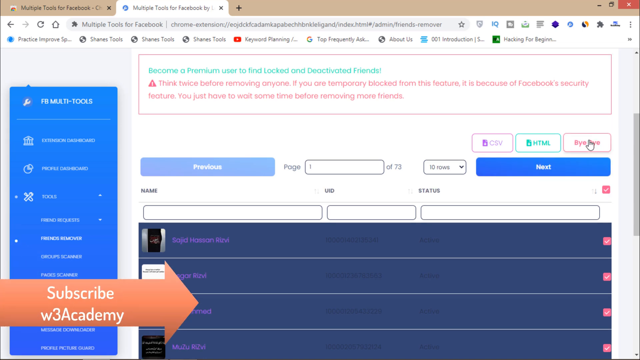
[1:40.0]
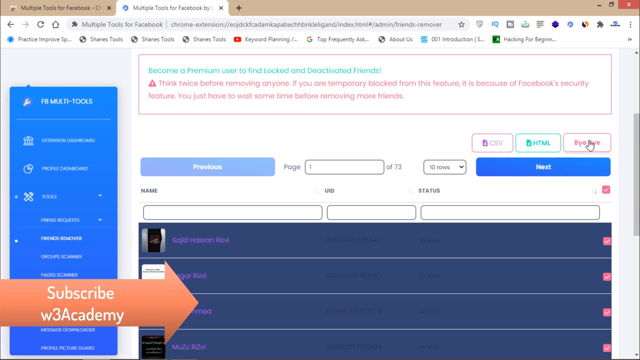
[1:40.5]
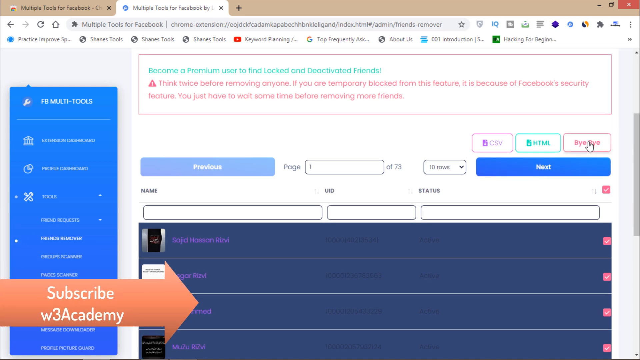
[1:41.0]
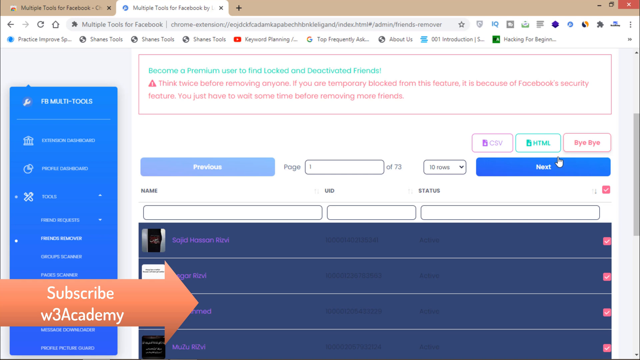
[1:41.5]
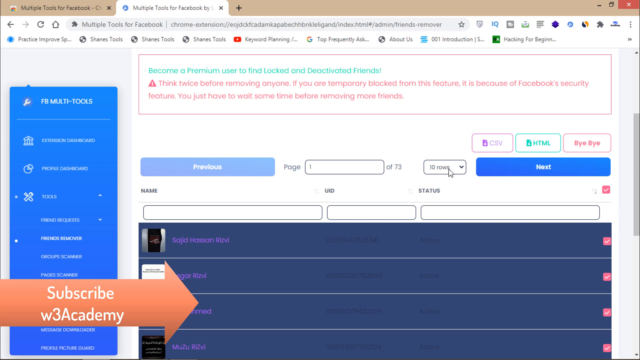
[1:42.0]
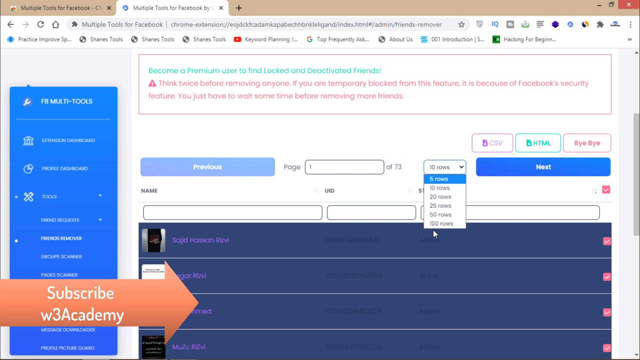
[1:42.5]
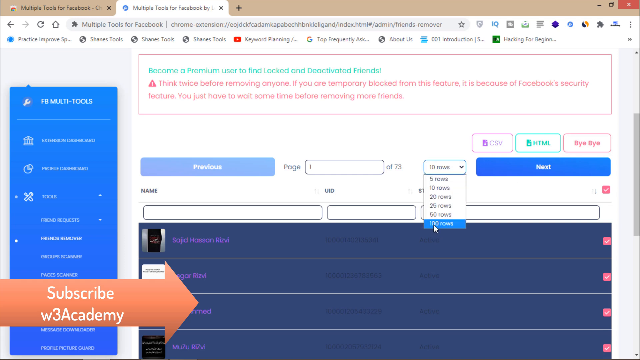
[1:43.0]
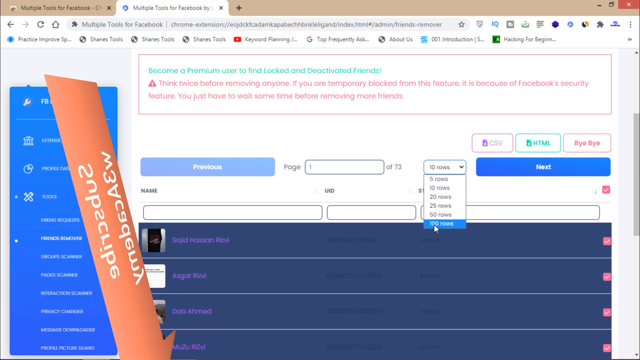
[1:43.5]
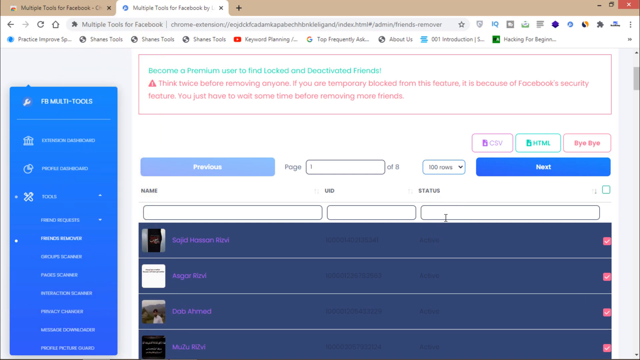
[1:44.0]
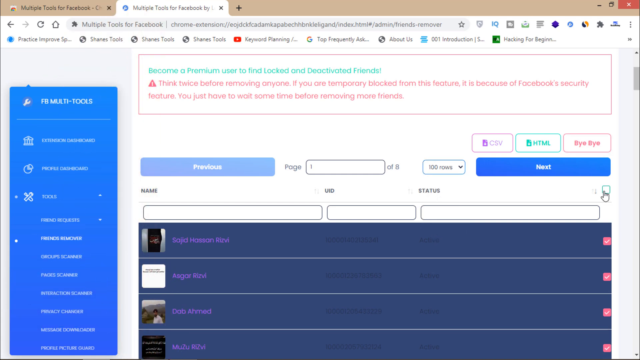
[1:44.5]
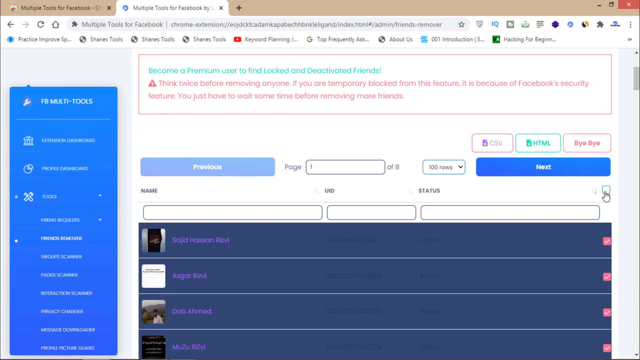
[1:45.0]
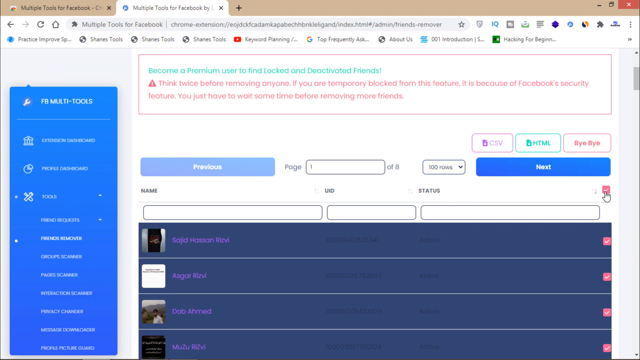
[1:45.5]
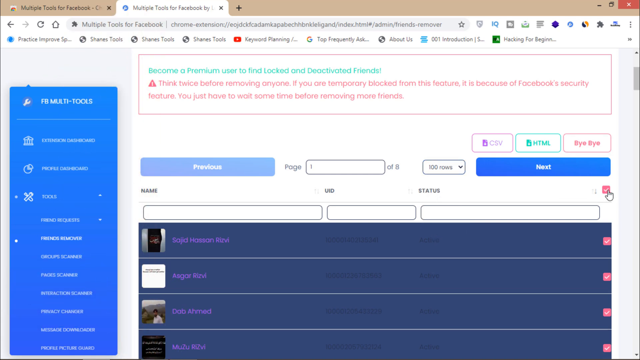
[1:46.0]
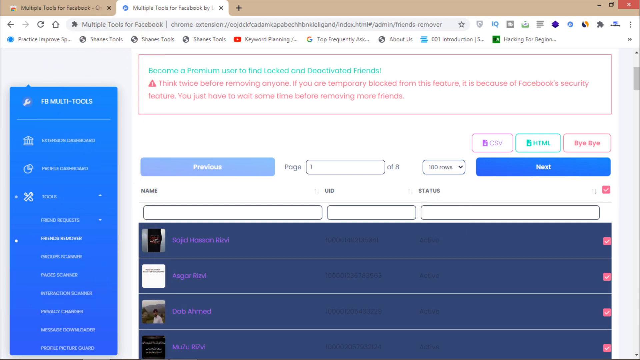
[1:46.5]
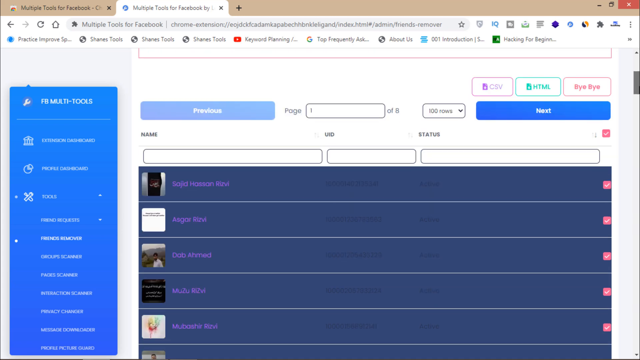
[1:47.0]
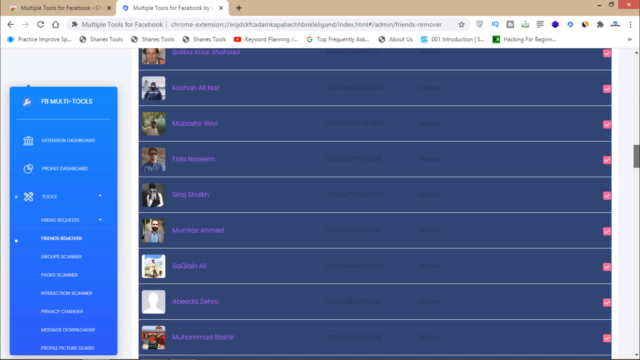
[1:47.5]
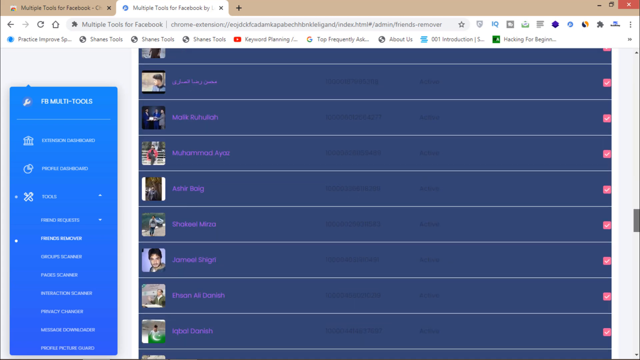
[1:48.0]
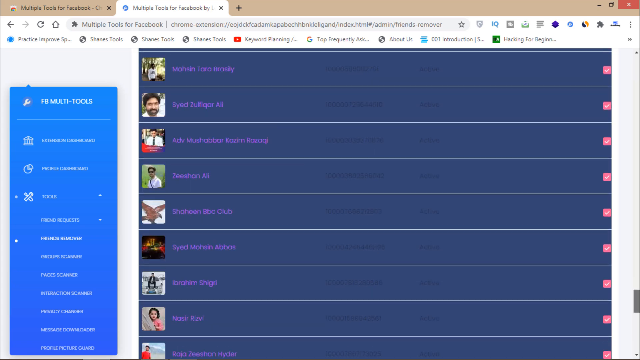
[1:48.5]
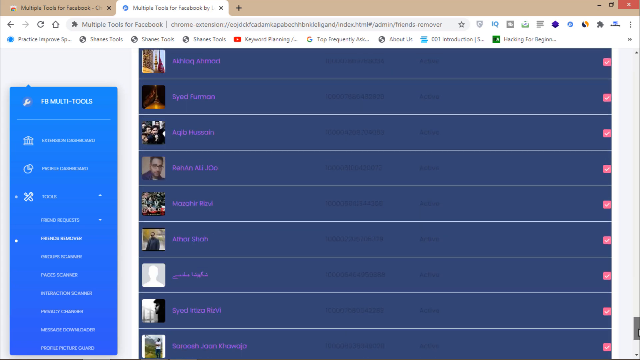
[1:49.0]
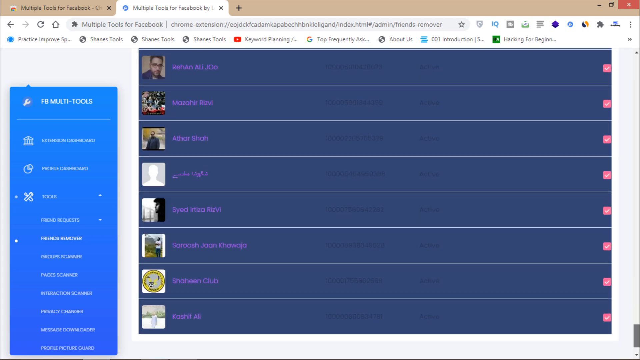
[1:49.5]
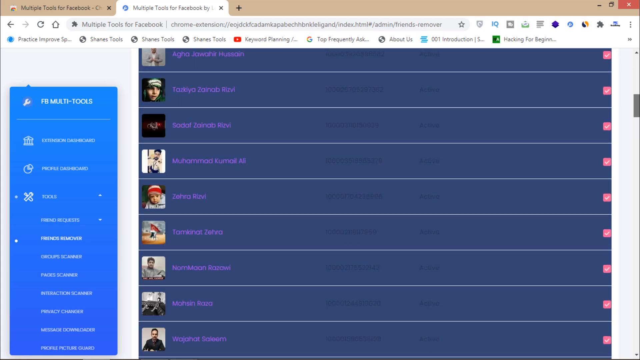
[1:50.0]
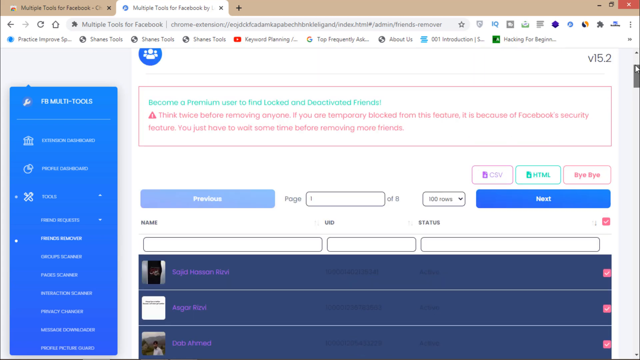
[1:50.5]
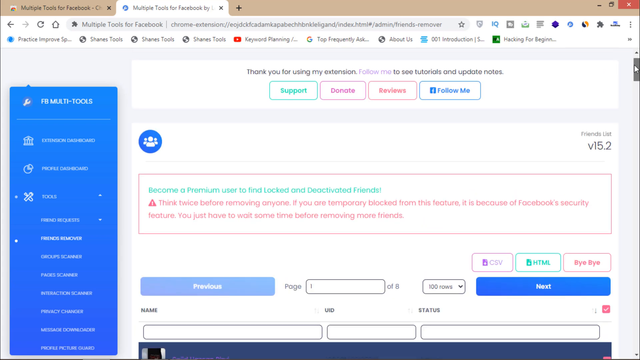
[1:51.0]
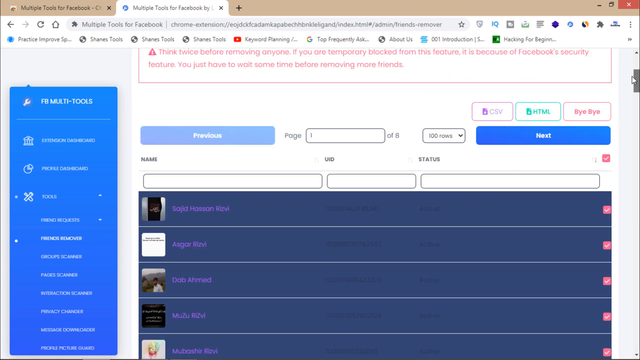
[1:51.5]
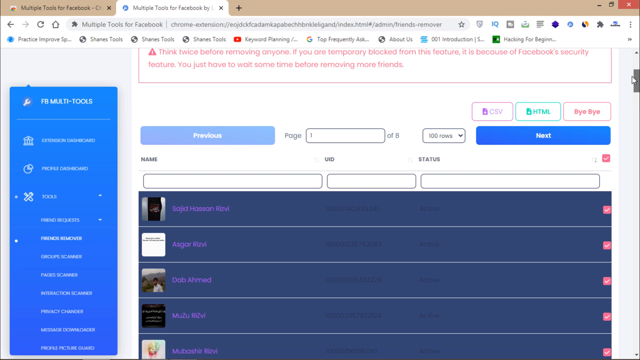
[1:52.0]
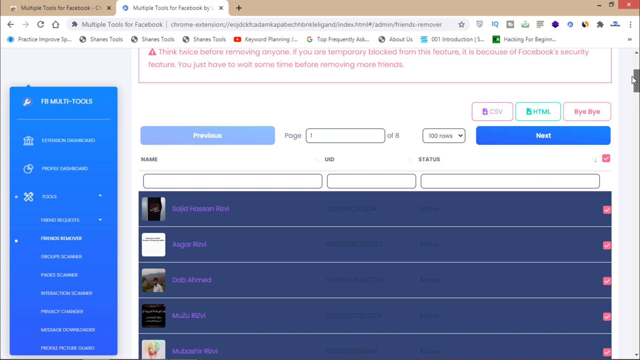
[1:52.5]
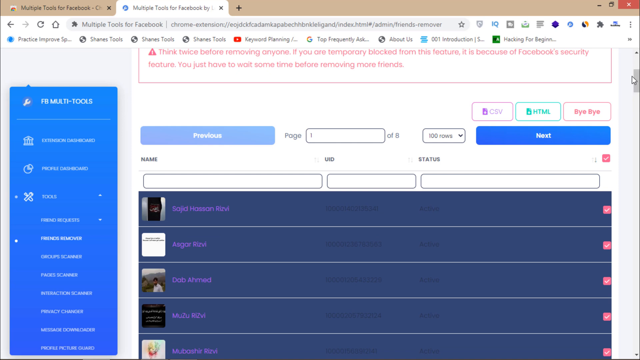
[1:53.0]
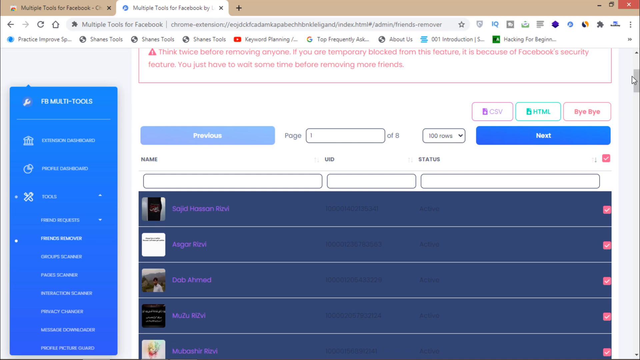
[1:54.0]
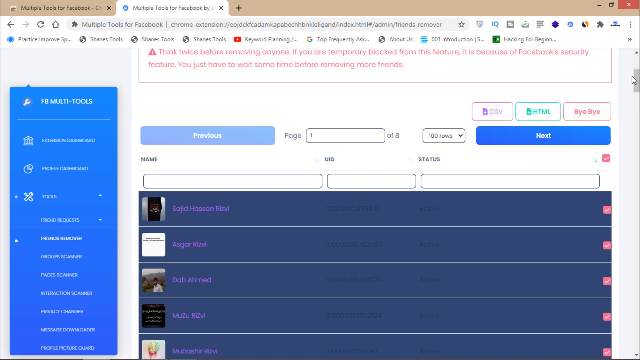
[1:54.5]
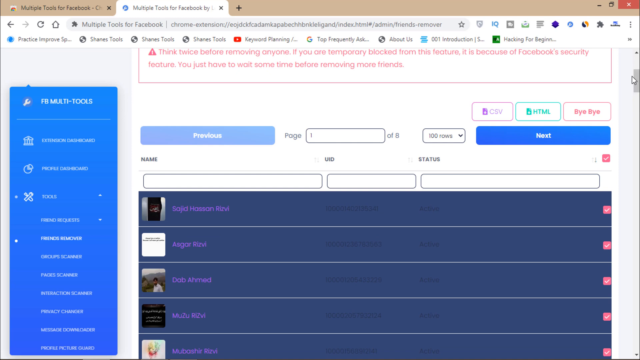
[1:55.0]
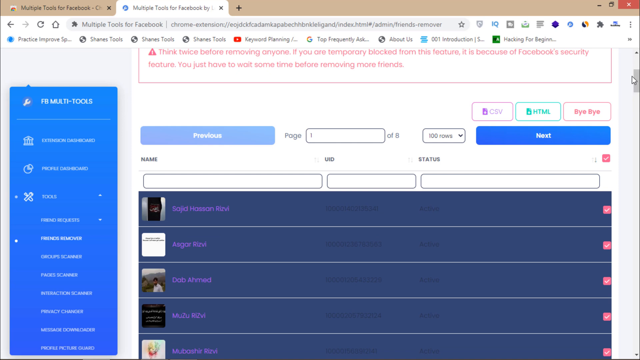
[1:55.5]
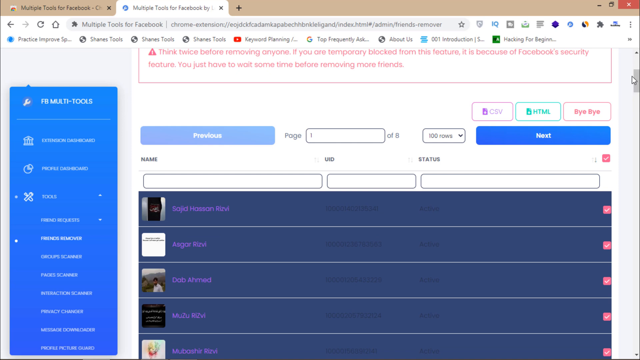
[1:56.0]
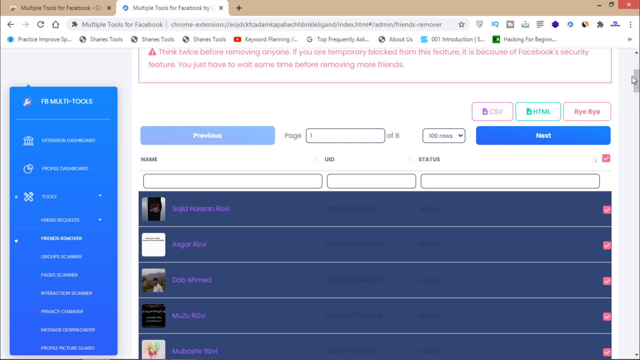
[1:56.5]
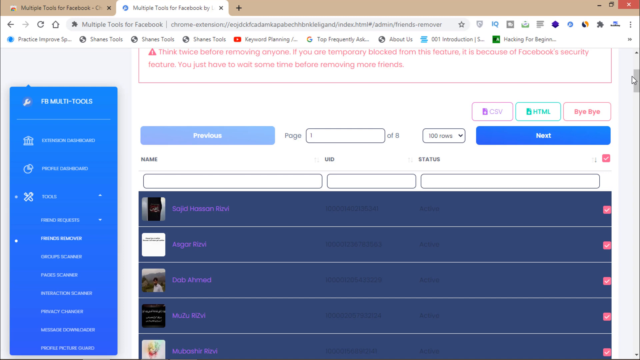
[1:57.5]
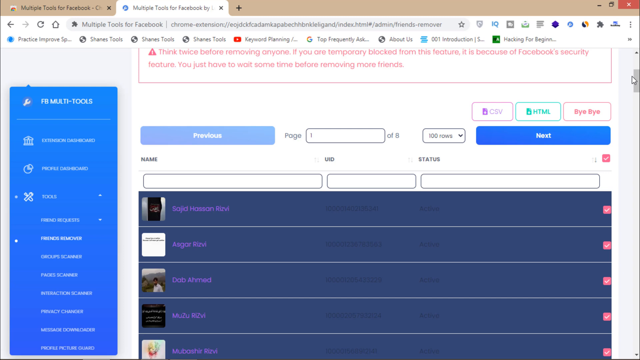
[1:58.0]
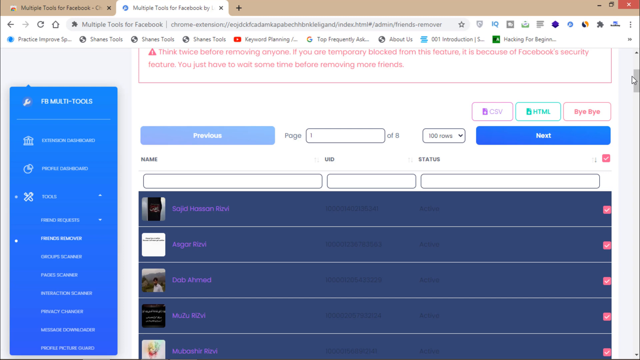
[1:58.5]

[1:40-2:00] The multiple tools for Facebook extension shows the text "become a premium user to find locked and deactivated friends. Think twice before removing anyone," along with the notice about being temporarily blocked by Facebook's security feature and having to wait before removing more friends. A lot of friends are highlighted, about a hundred rows; the selection started at 10 rows and is now 100 rows. The user scrolls down through the friends but has not hit the bye-bye button yet.